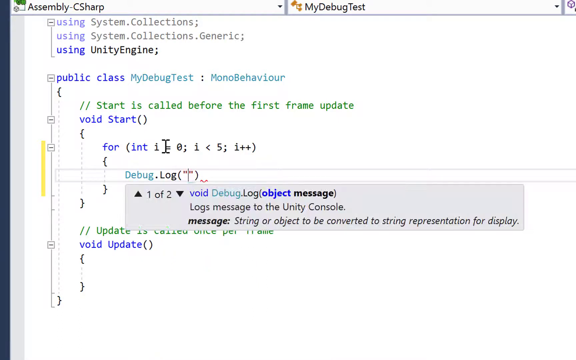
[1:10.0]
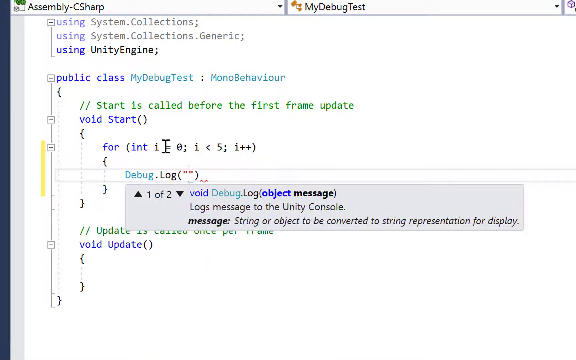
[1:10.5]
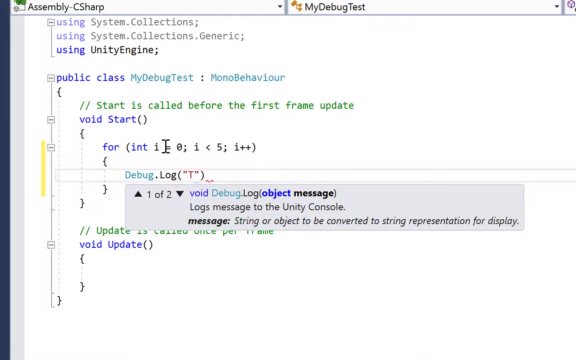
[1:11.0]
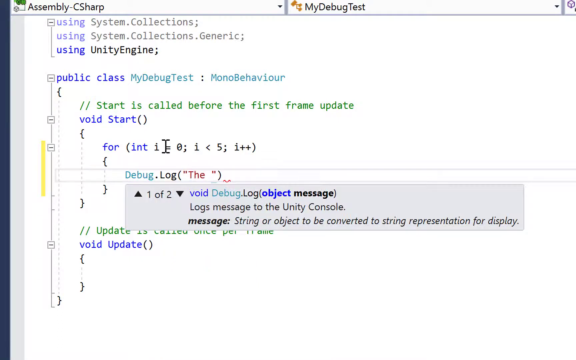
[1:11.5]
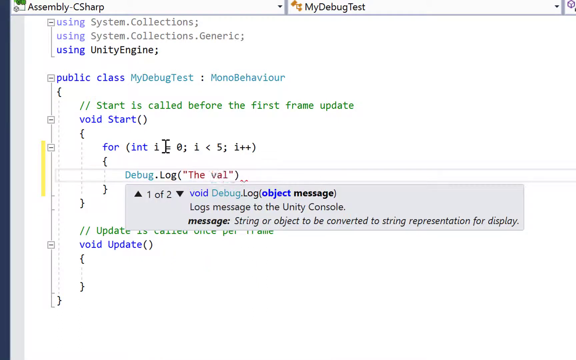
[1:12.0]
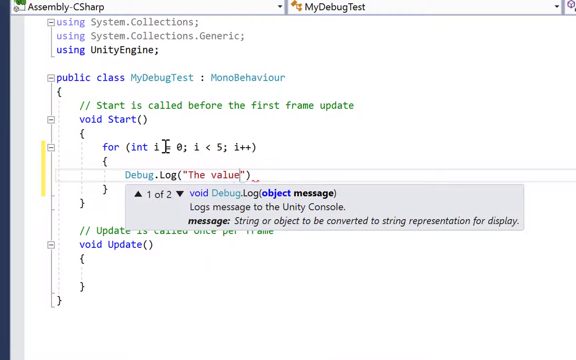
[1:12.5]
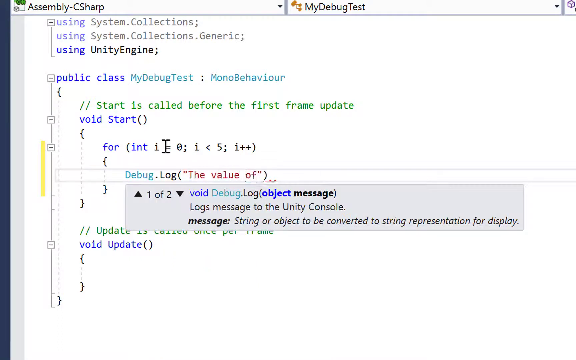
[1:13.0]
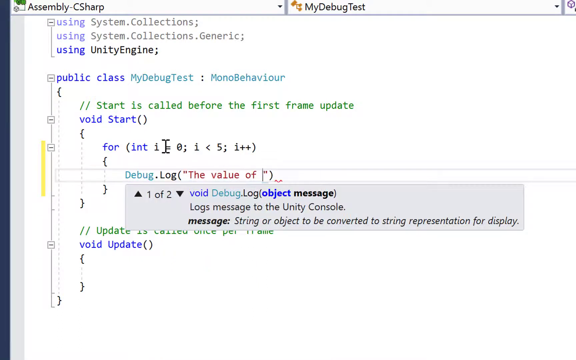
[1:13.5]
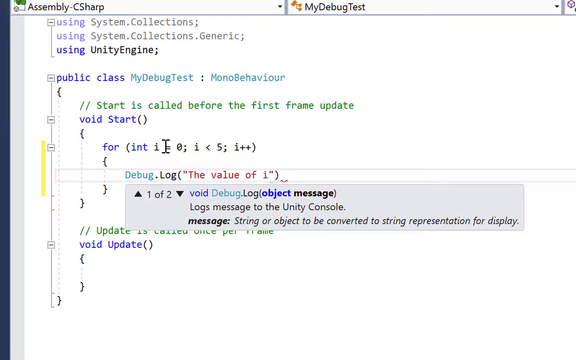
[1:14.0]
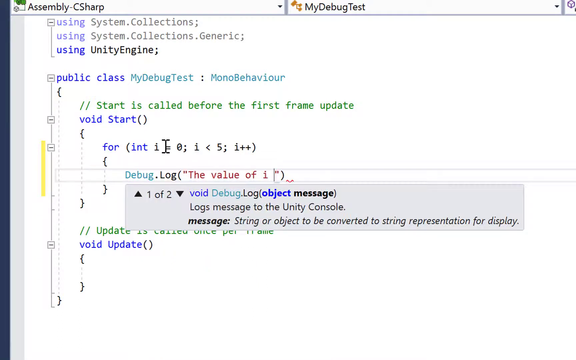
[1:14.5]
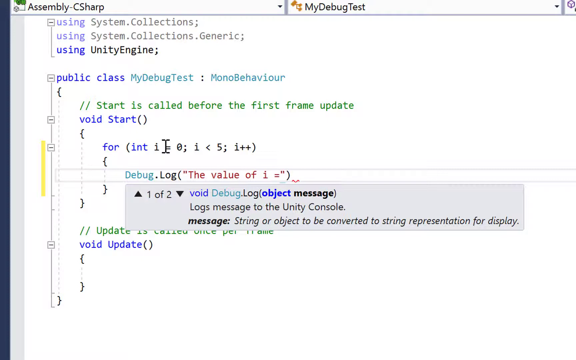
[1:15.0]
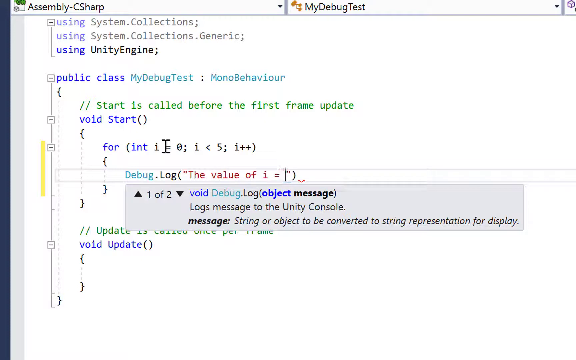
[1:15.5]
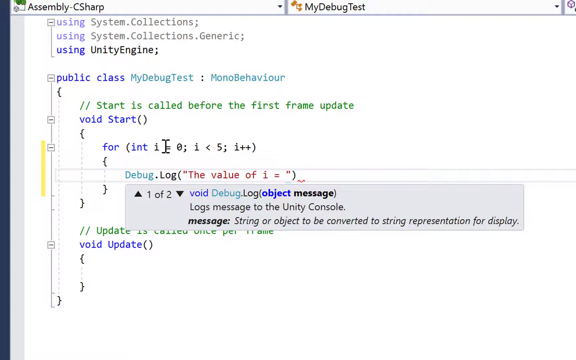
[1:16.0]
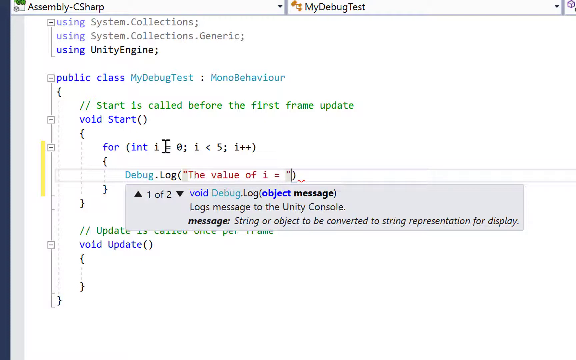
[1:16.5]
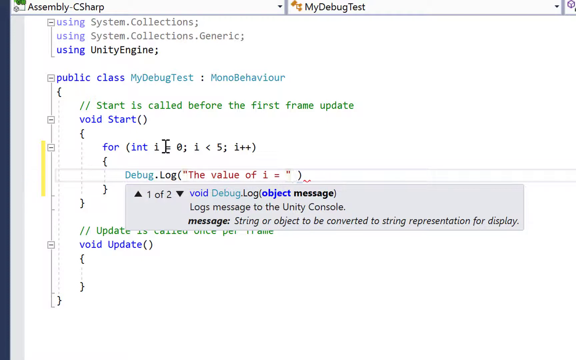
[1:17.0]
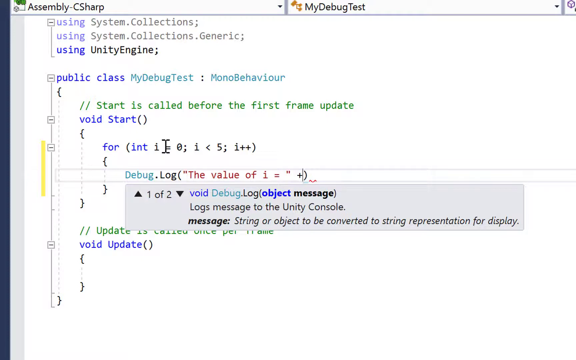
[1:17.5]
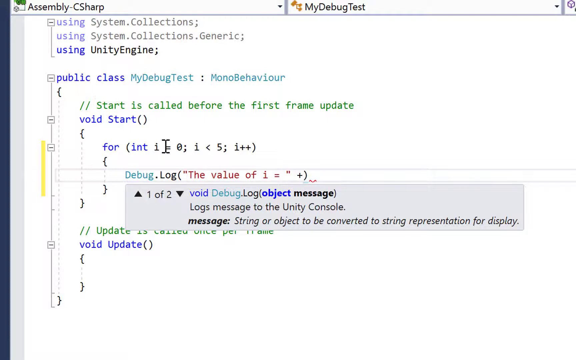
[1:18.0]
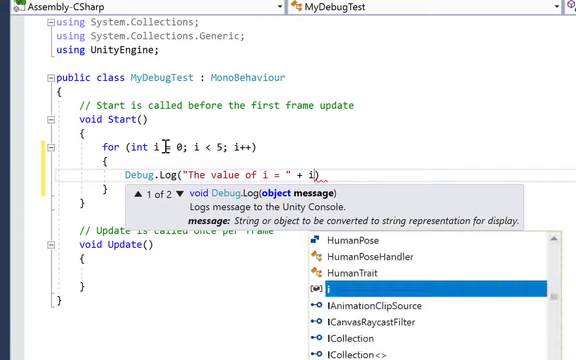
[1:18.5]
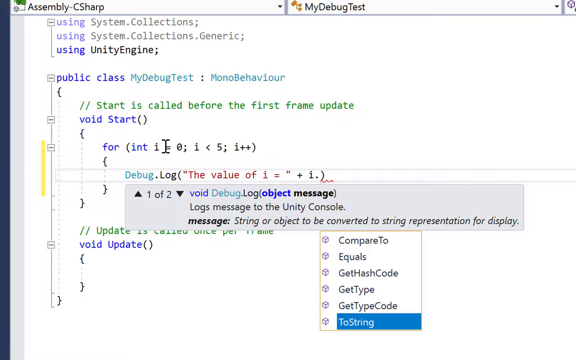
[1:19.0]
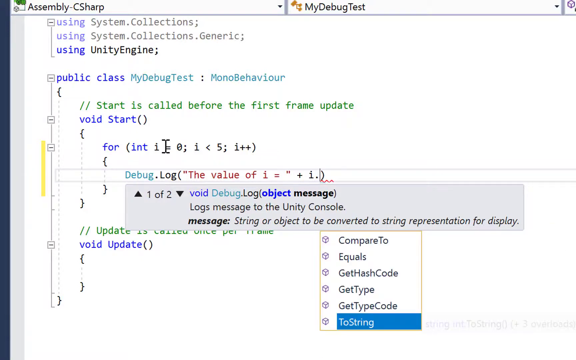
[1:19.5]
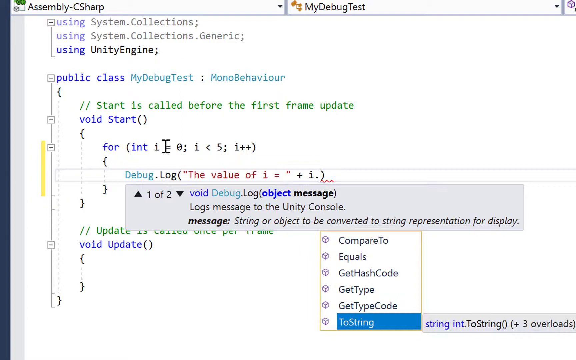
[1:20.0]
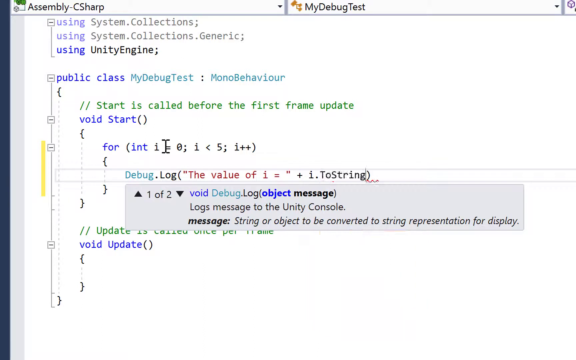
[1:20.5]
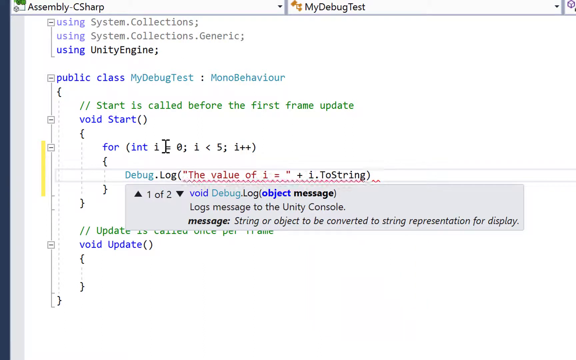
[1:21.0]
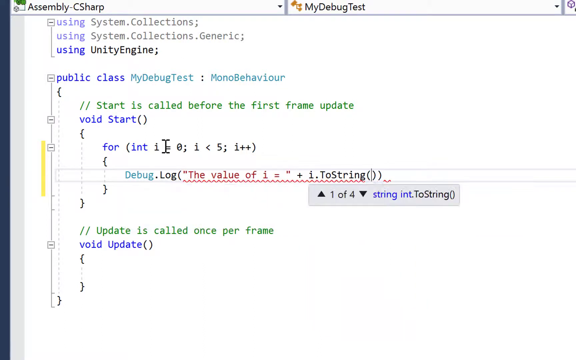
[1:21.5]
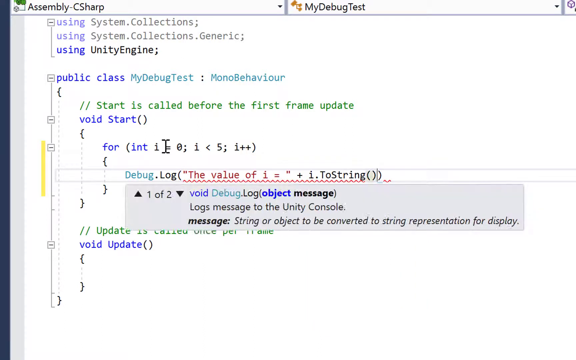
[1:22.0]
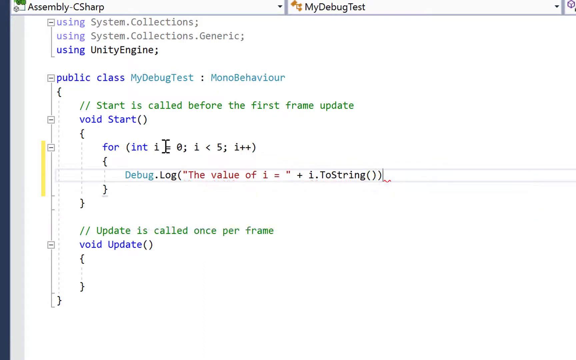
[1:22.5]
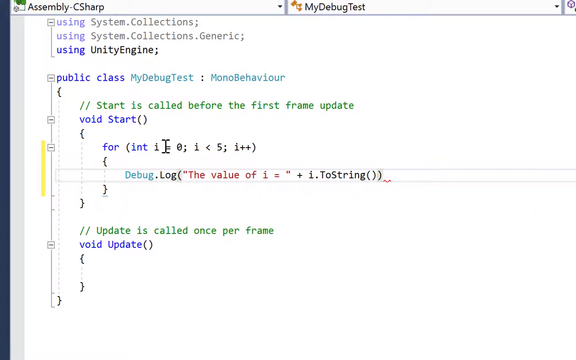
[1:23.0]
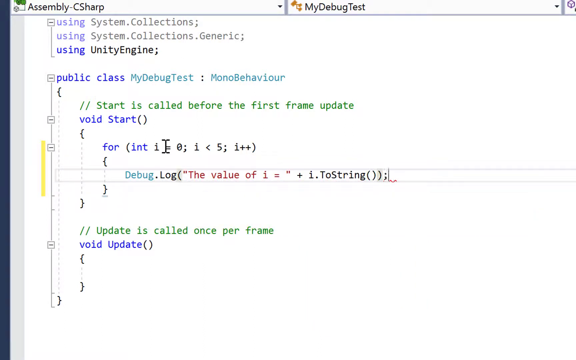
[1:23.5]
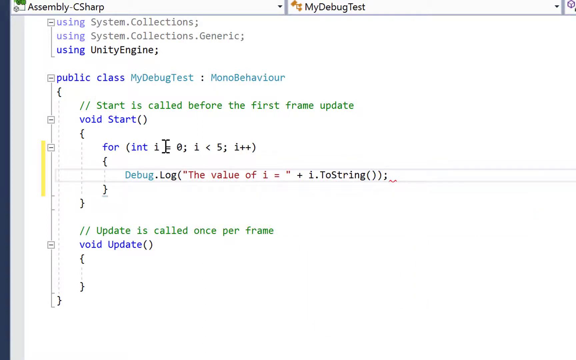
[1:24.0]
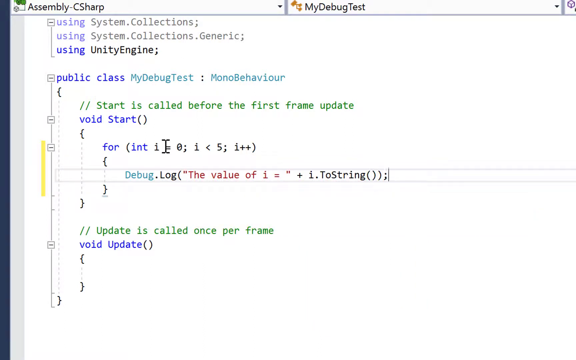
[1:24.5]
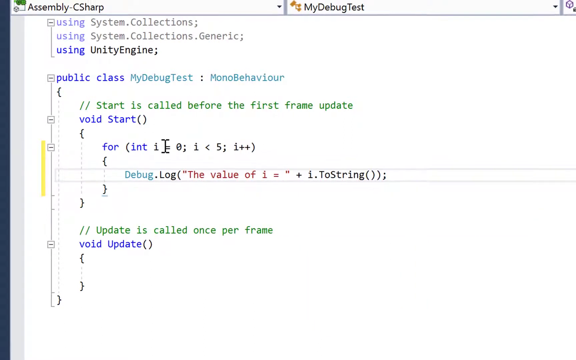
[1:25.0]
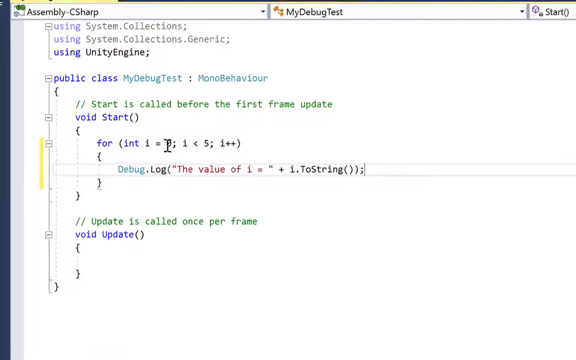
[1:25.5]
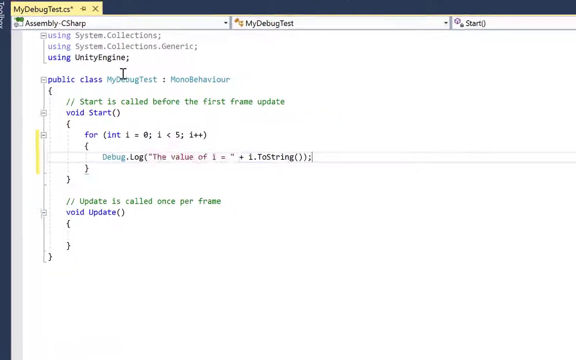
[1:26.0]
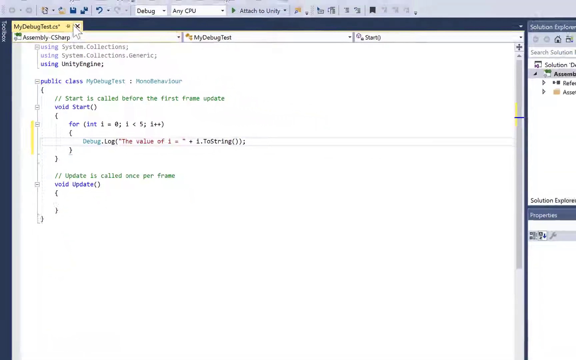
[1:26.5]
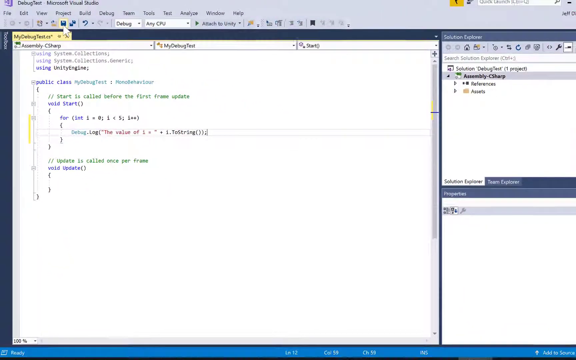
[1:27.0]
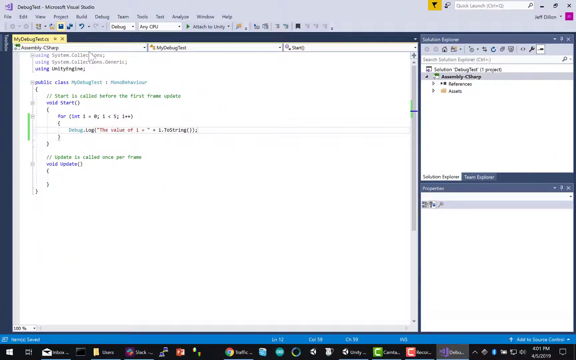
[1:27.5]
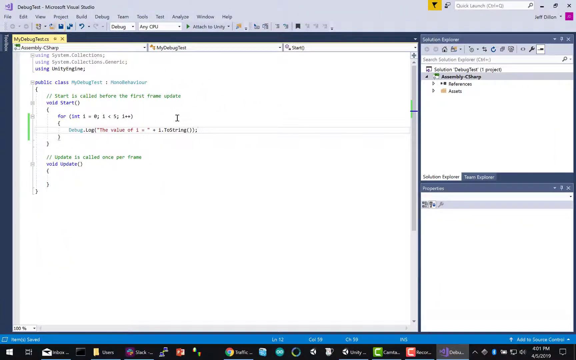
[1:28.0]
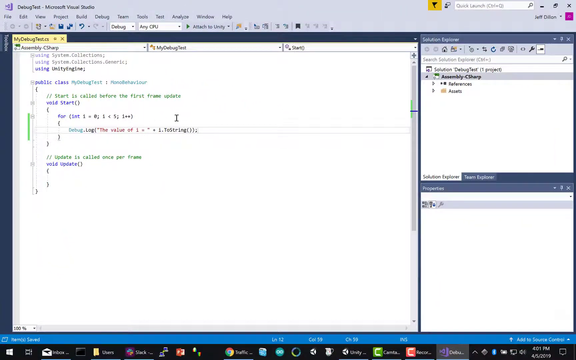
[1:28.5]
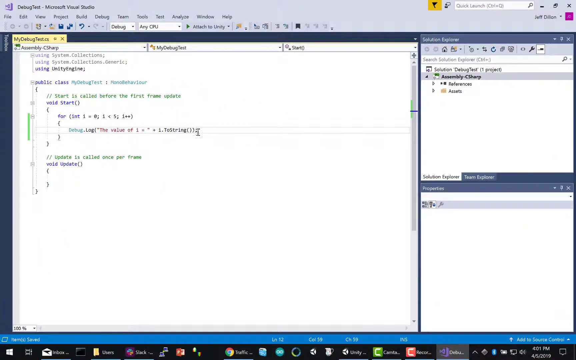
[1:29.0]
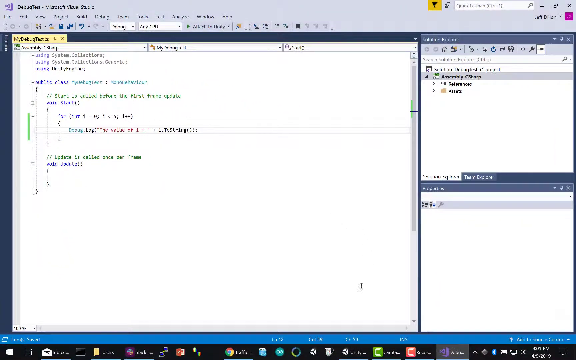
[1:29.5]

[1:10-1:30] More code is being added on the left side. A different debugging action happens here: instead of typing debug, they type in the value of i being greater than five. The screen layout looks exactly the same, with the main focus on the left side, where the code is being inserted, and other content on the right side that gets little attention.